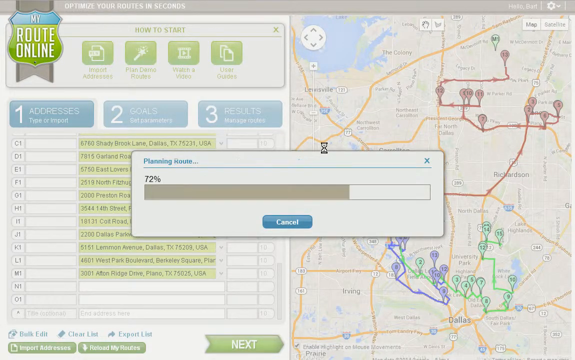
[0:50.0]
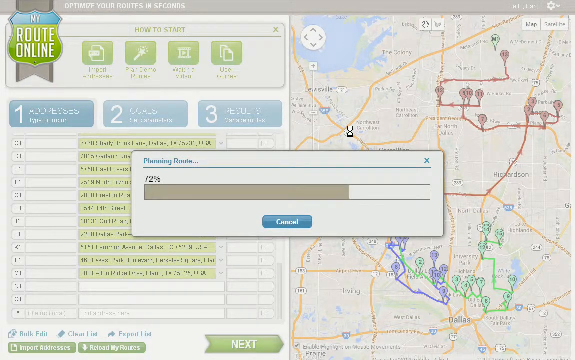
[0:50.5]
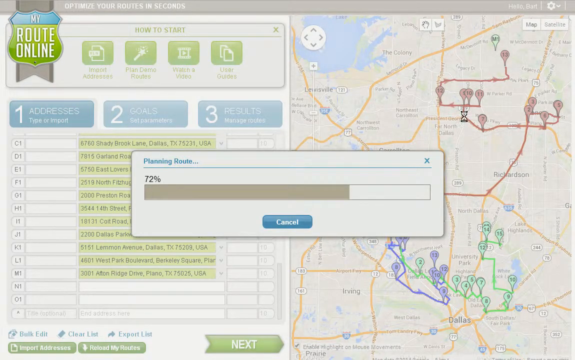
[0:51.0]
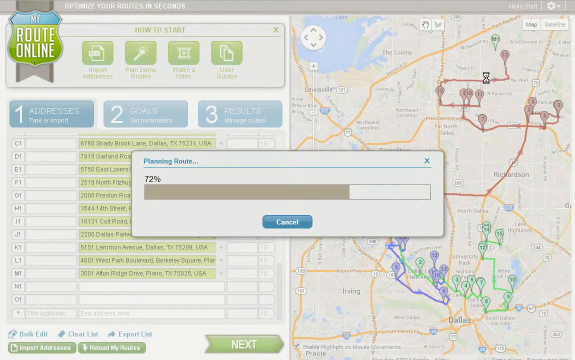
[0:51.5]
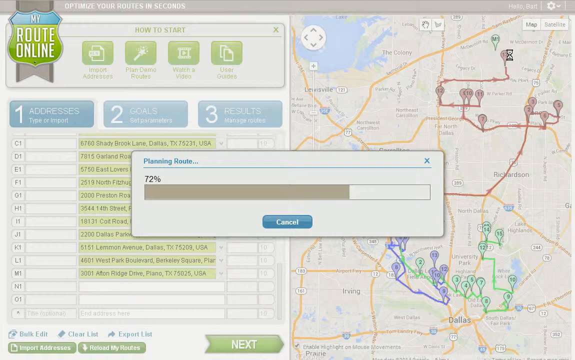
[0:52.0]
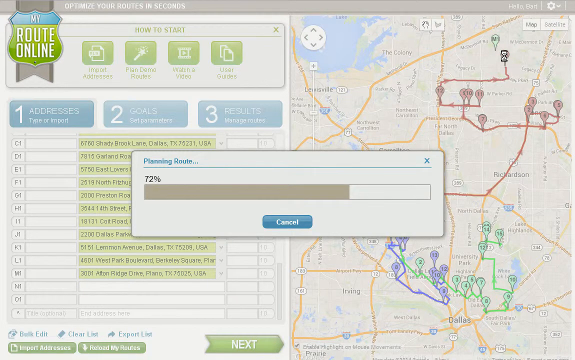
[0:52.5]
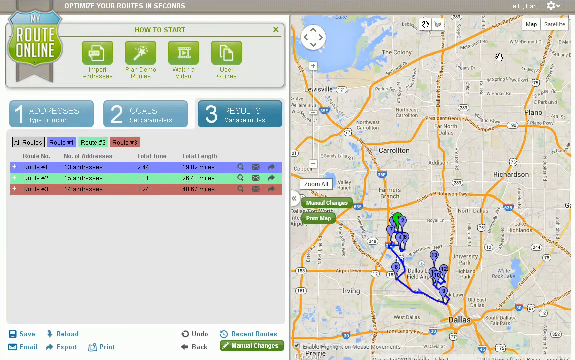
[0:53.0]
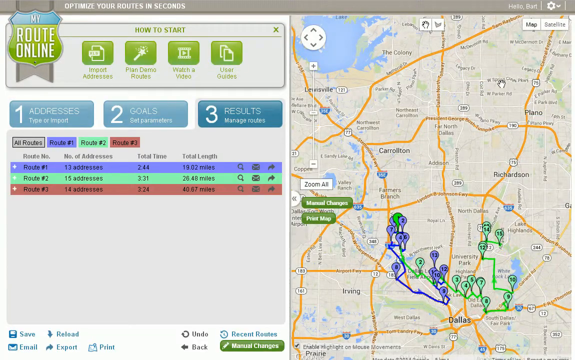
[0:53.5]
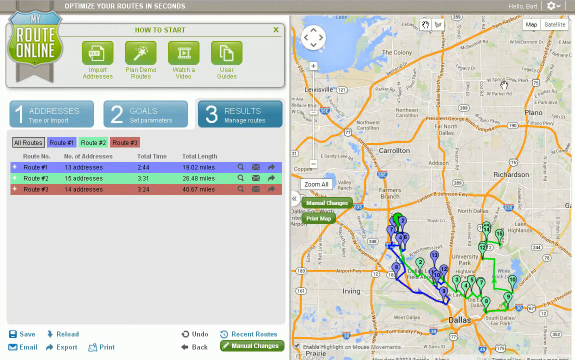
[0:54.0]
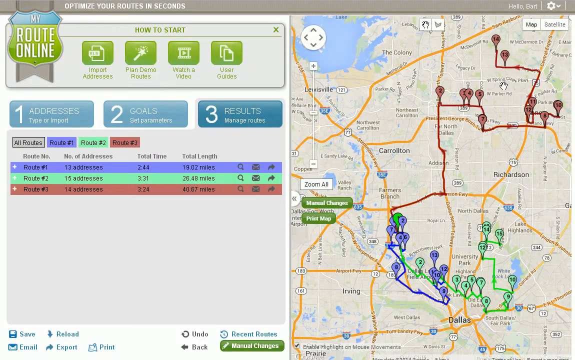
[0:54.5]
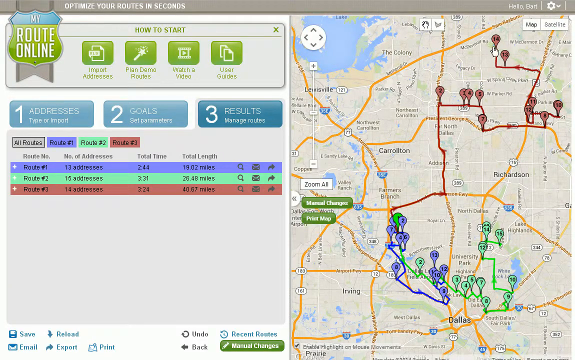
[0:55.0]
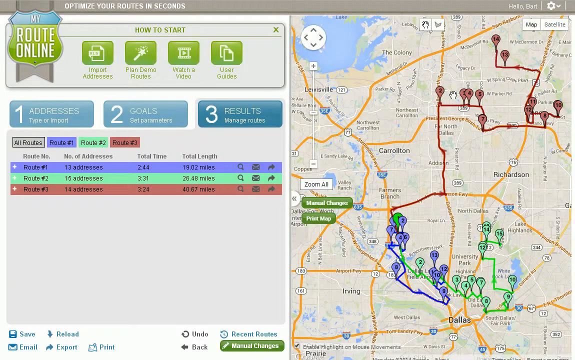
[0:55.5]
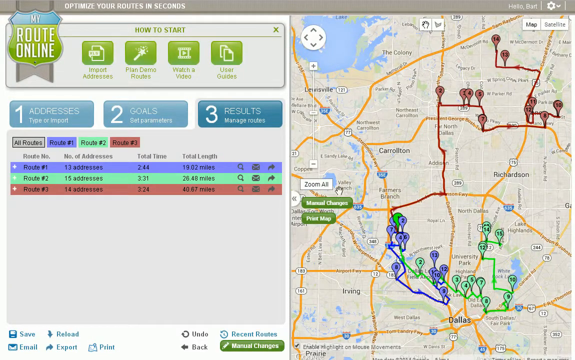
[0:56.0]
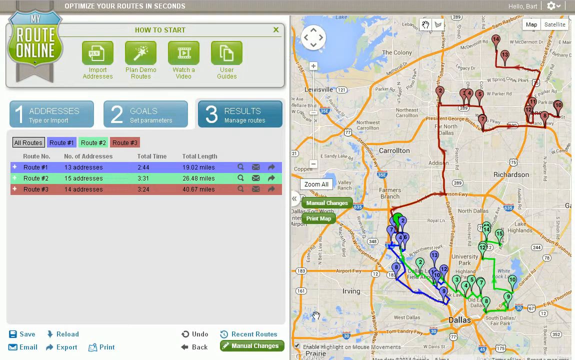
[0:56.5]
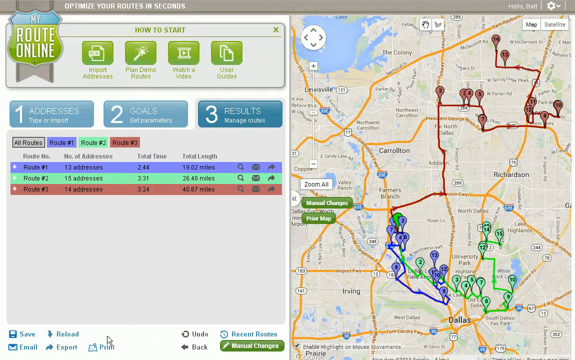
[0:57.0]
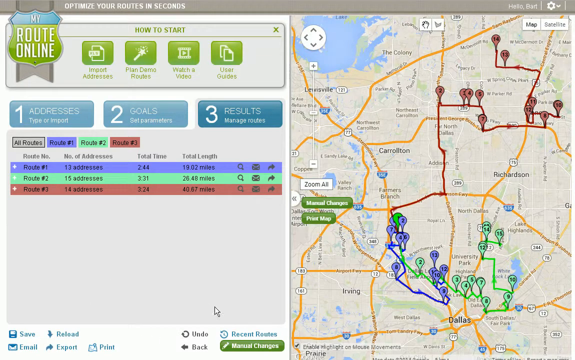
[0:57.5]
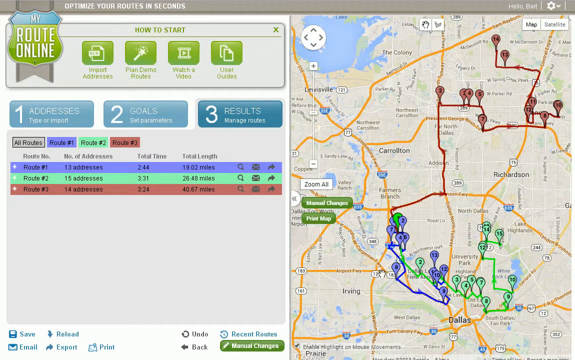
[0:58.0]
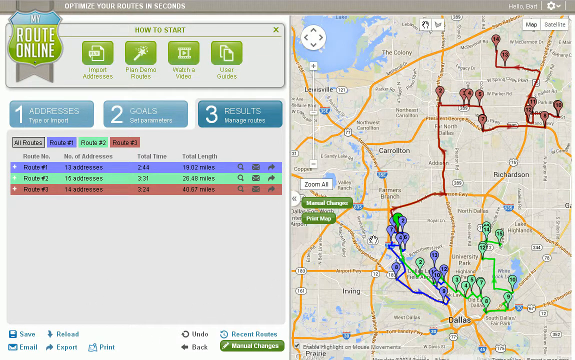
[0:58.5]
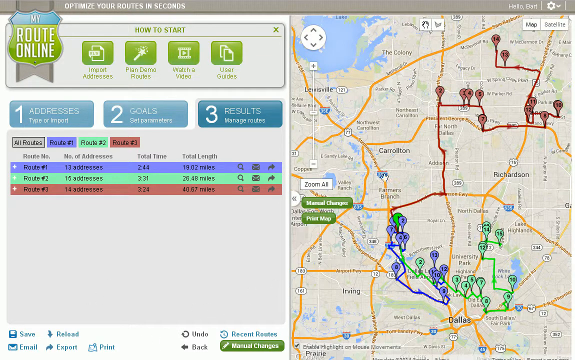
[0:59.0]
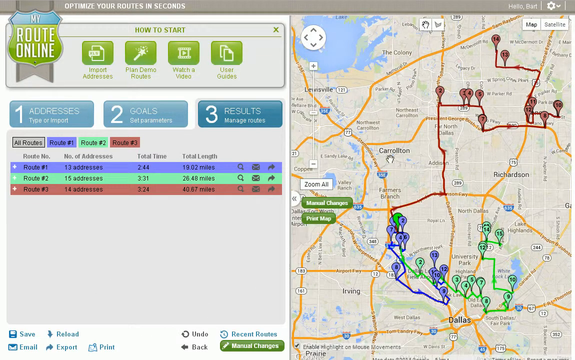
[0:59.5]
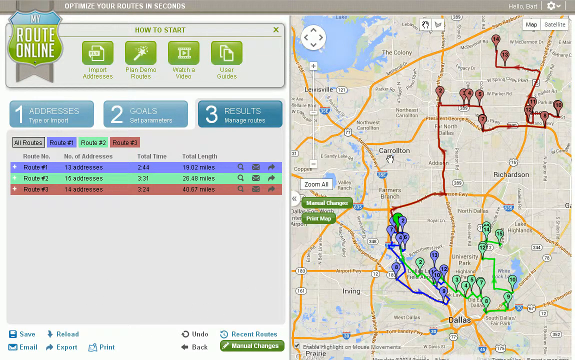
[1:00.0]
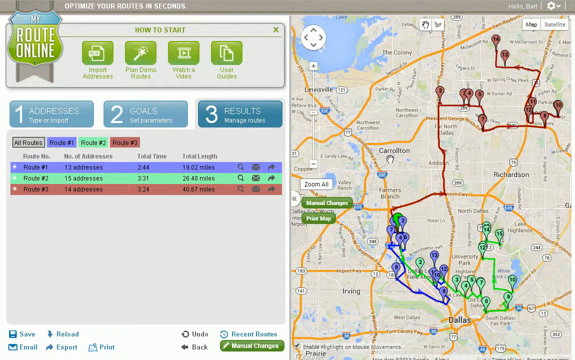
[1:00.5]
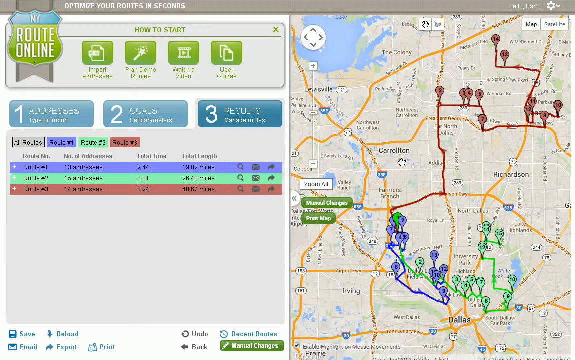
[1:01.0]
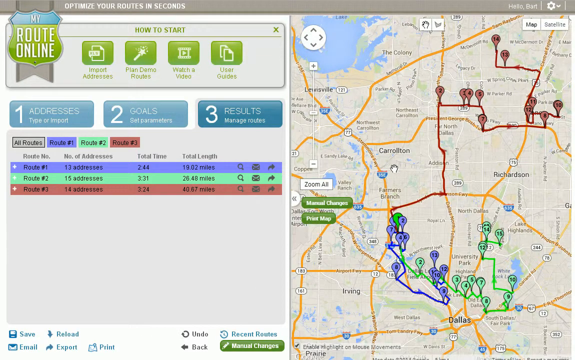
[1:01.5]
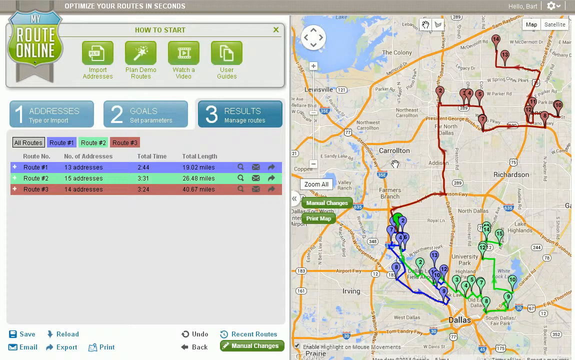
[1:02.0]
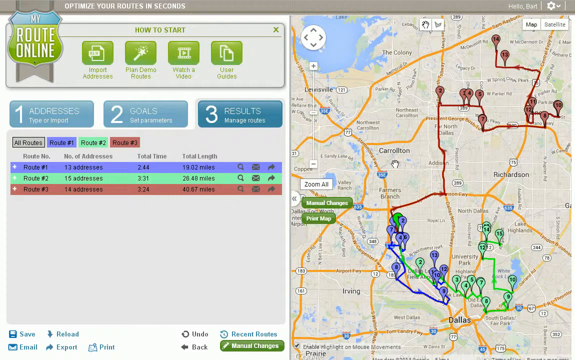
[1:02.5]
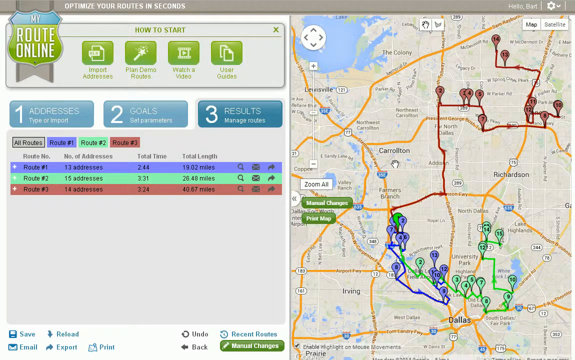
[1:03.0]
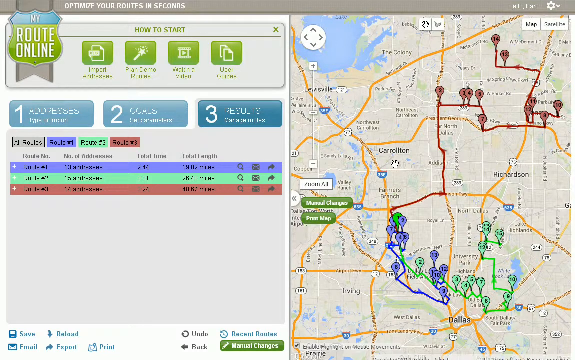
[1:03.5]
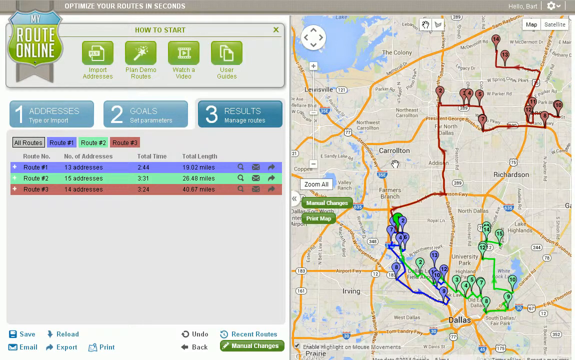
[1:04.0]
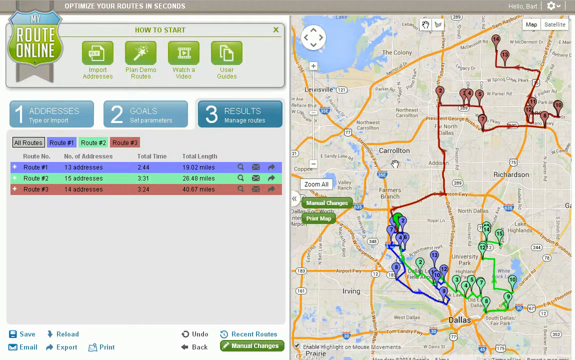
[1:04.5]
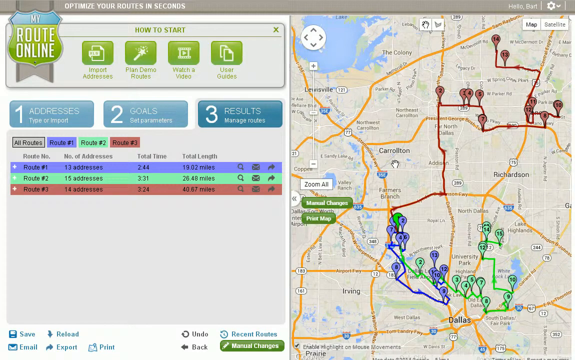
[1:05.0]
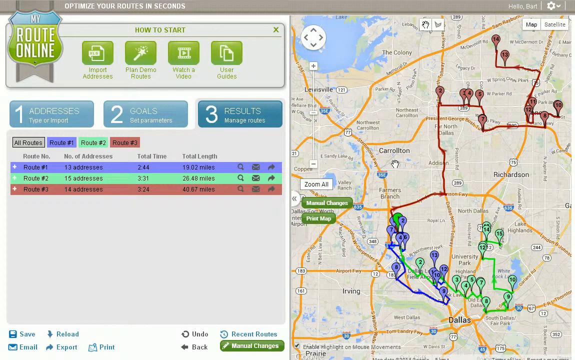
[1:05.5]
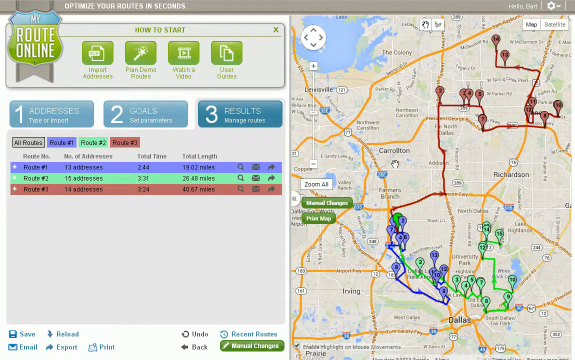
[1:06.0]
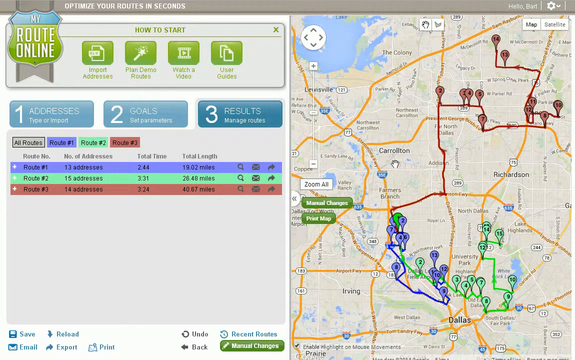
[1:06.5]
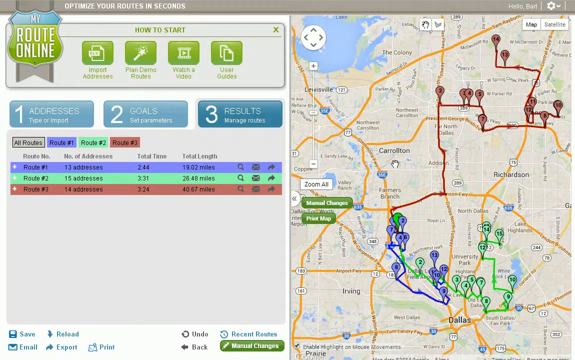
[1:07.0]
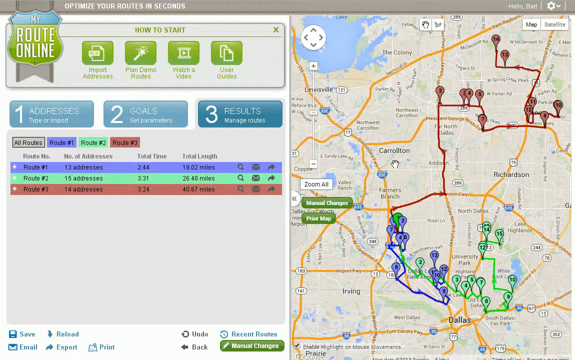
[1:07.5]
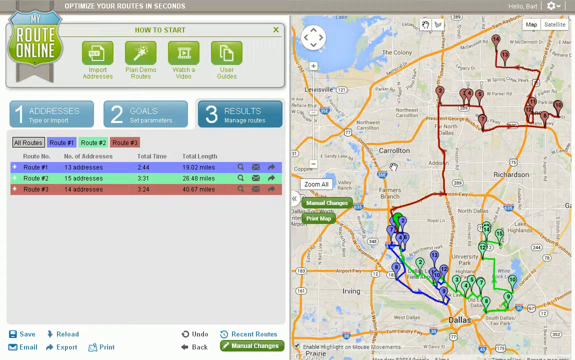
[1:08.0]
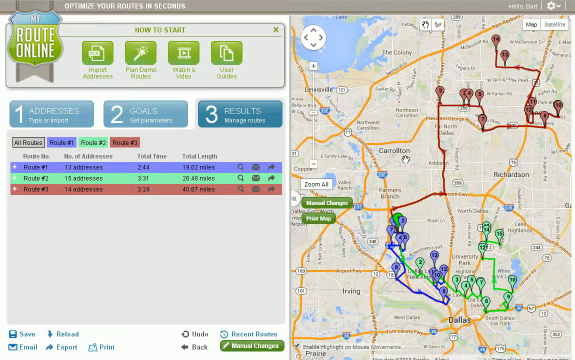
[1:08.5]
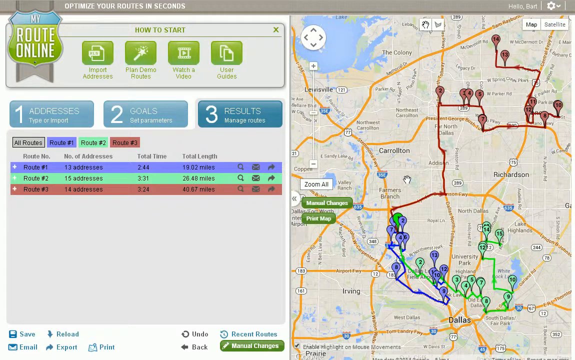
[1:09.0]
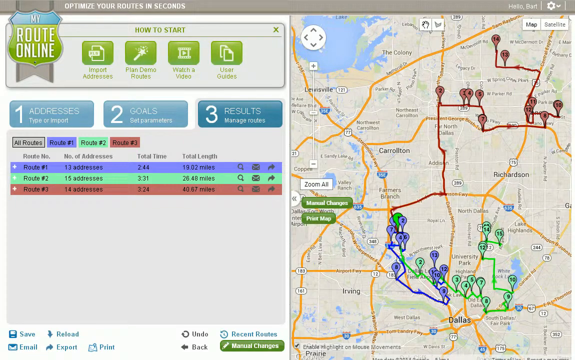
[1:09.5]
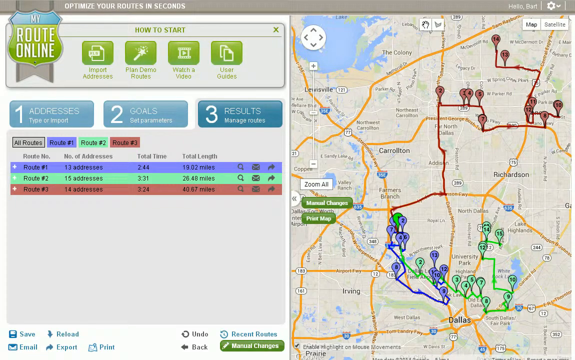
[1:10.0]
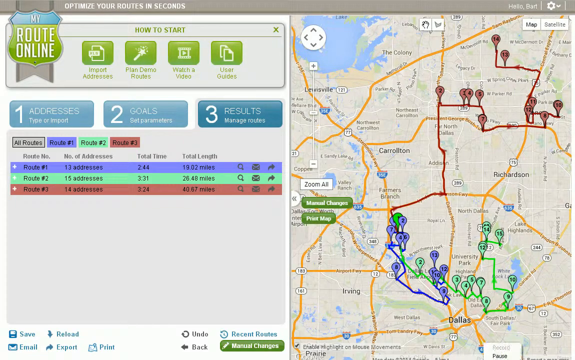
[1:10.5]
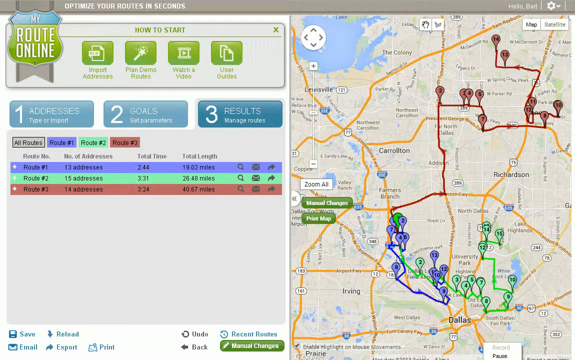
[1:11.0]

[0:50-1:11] The location is still being saved to the other route. A bar in the middle of the screen finishes, showing that it has been saved to the new route, and on the map the location is now red along with the other red locations, having changed from green to red.